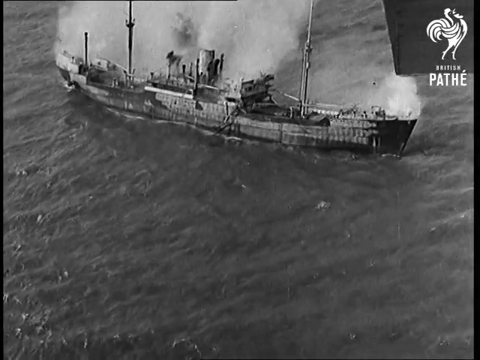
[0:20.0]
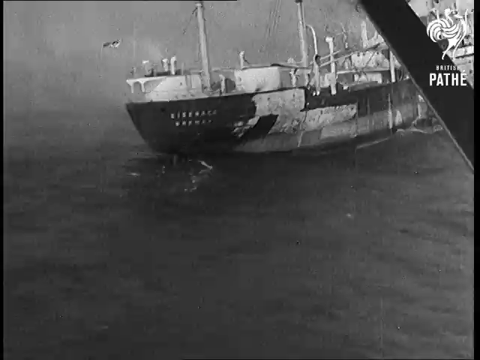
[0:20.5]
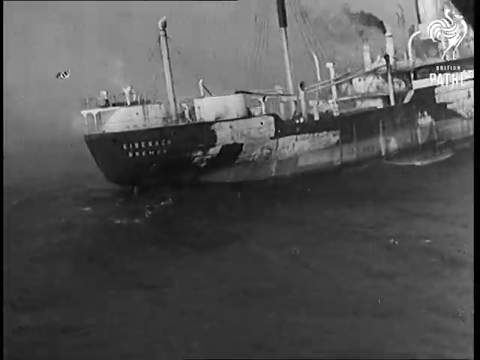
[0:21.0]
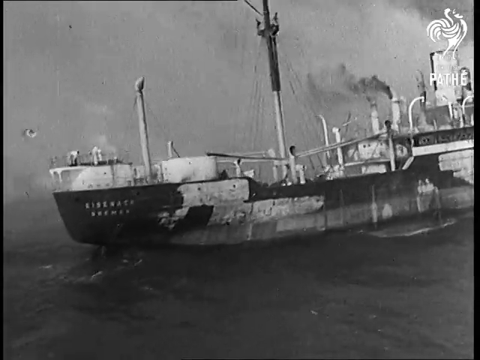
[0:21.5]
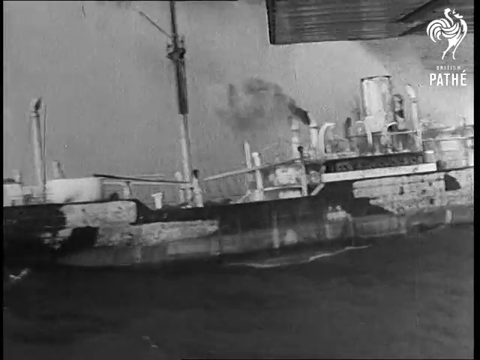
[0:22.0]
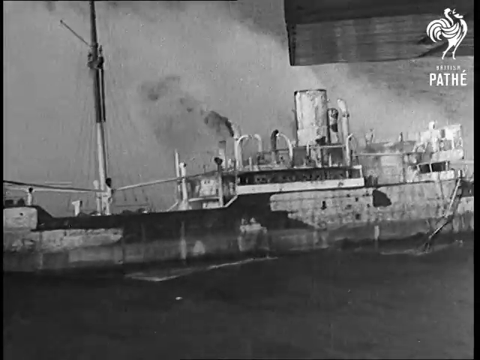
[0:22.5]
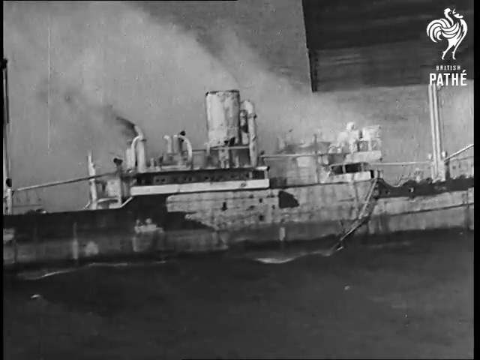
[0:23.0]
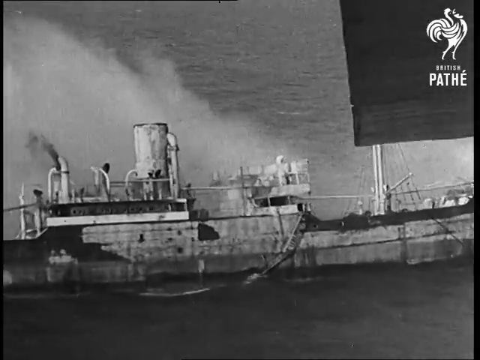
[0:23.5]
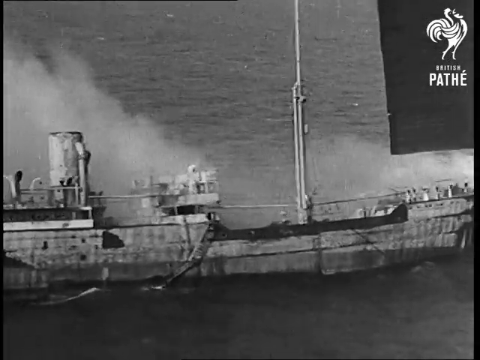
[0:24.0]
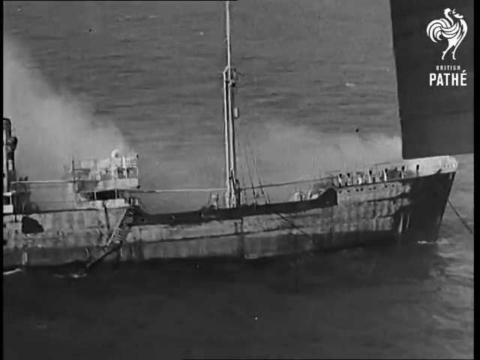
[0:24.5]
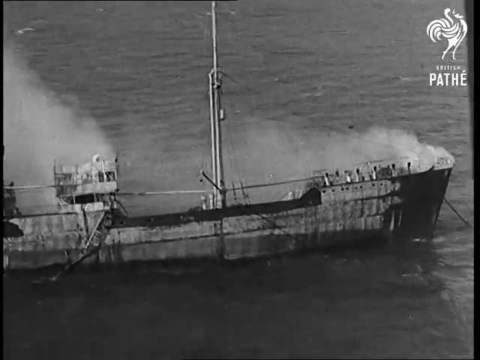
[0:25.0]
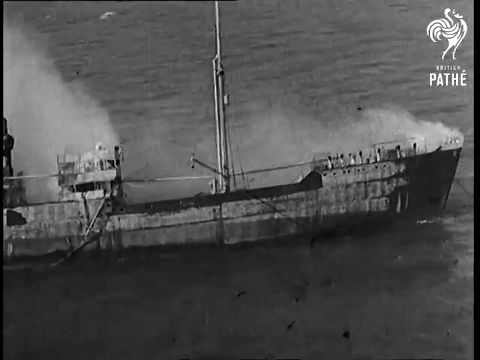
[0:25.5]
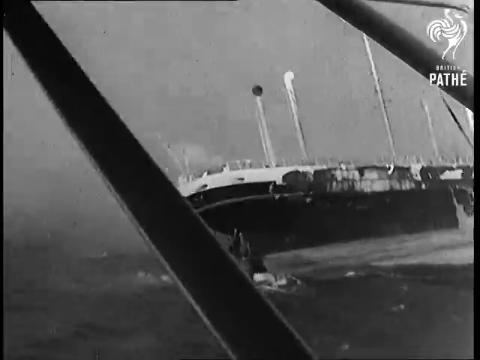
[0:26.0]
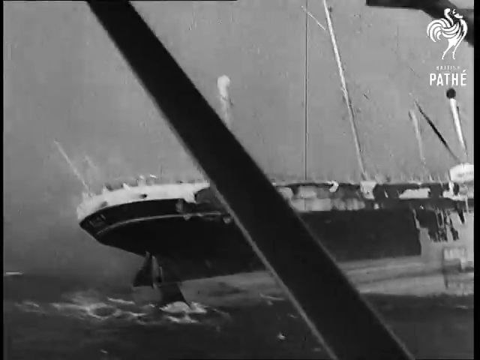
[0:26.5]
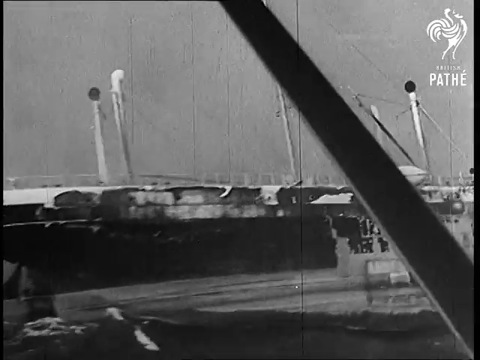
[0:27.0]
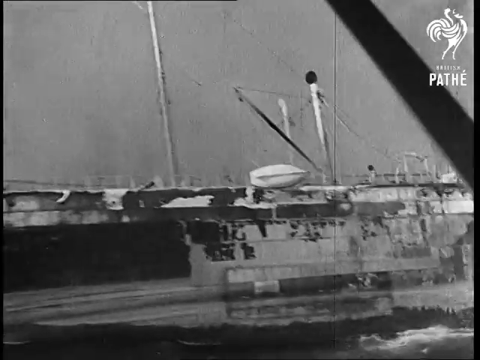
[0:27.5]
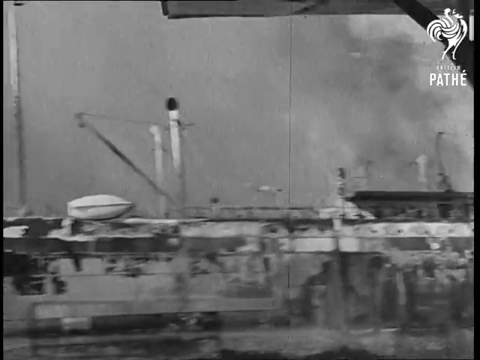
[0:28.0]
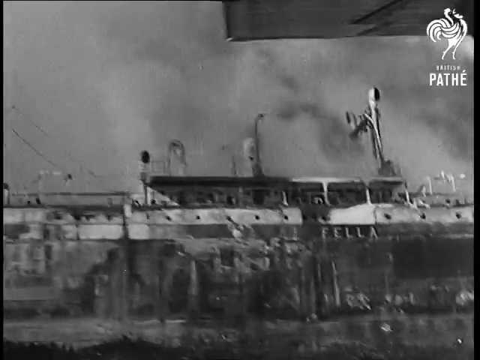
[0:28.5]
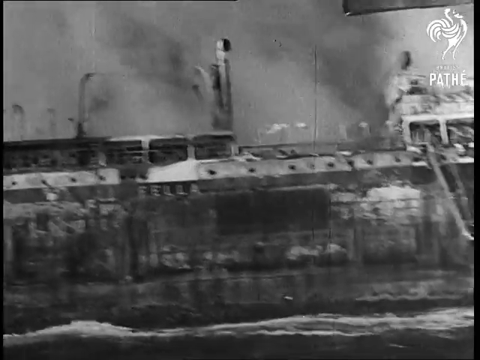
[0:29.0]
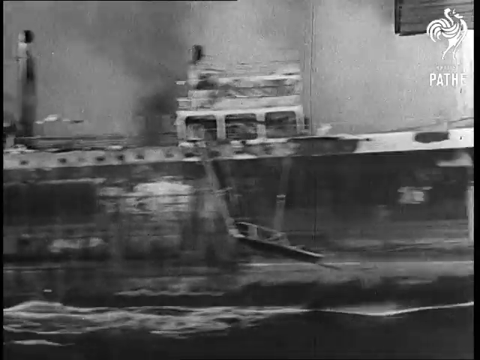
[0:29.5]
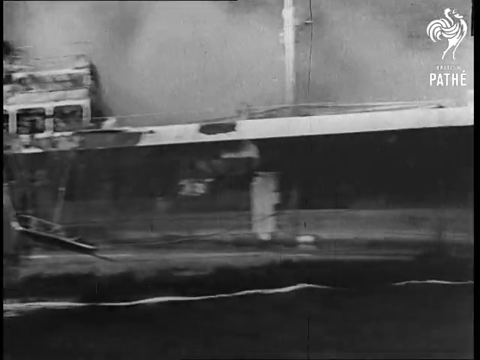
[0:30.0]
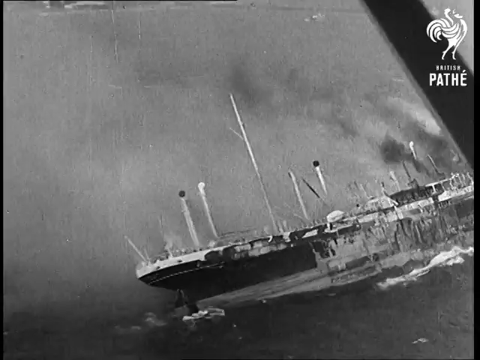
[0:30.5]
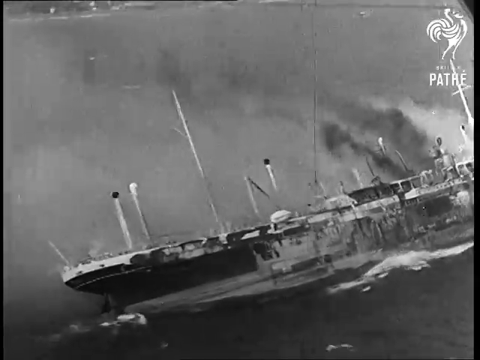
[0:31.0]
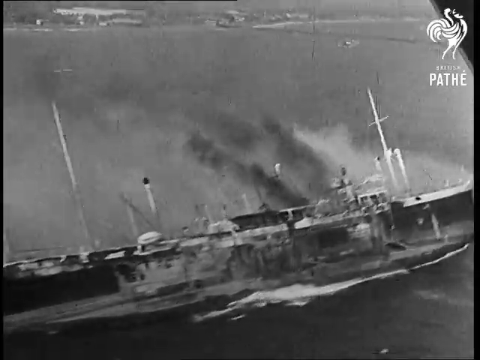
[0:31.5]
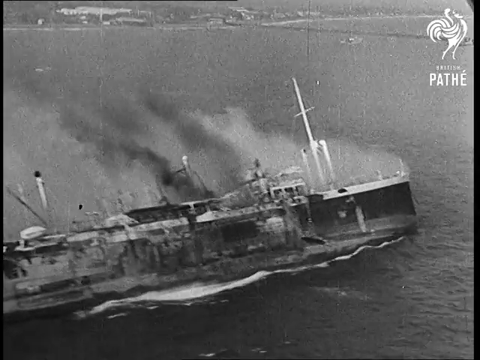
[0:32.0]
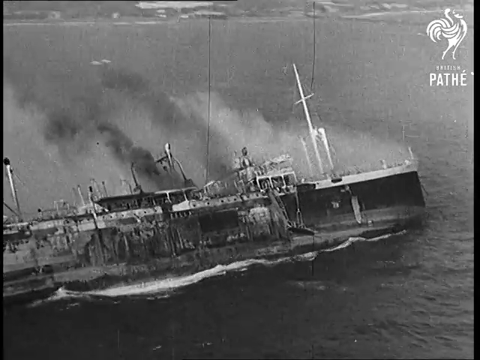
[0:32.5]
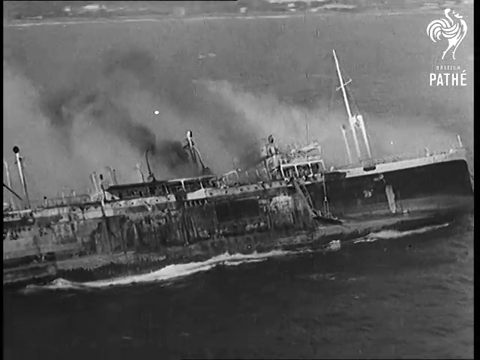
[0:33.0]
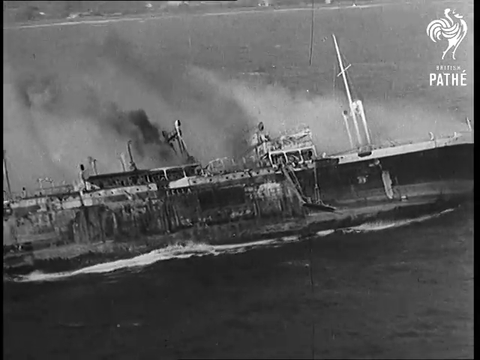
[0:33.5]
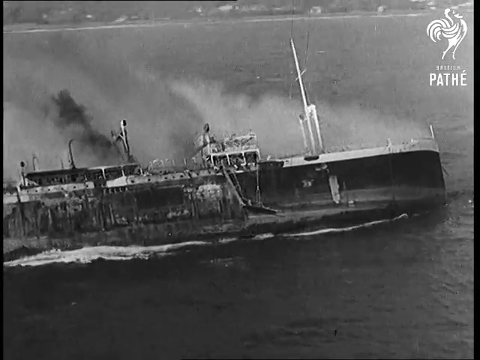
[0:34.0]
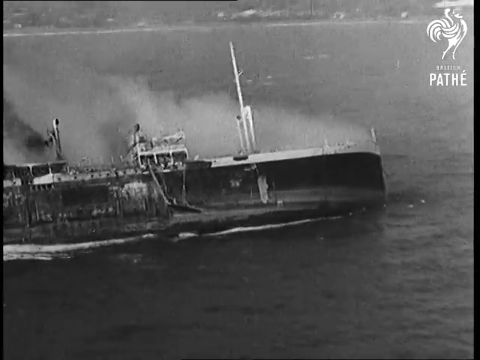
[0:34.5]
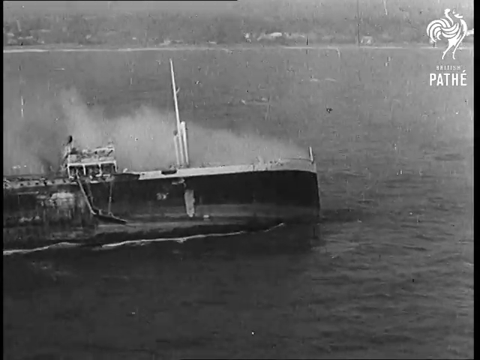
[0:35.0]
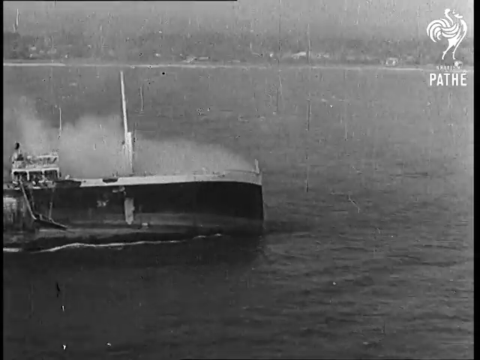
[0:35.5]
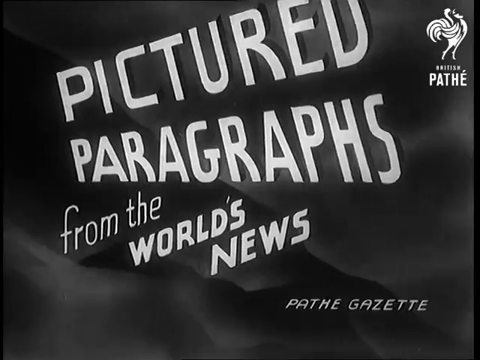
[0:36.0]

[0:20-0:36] Footage of the stricken ships continues. One ship is seen side-on from very close, with lots of smoke billowing from it; judging by the angle, the shot seems to be taken from the air, possibly from a low-flying plane, or possibly from another ship sailing past. Another very close-up shot shows smoke billowing, apparently filmed while flying alongside. Then an aerial shot shows a ship tilted to the left, almost as if about to sink, with lots of smoke emerging from it, apparently filmed from the air. The video ends with an outro screen that reads "Pictured paragraphs from the world's news", with the words "Pathé Gazette" in the bottom right corner. The footage is all black and white and very grainy.